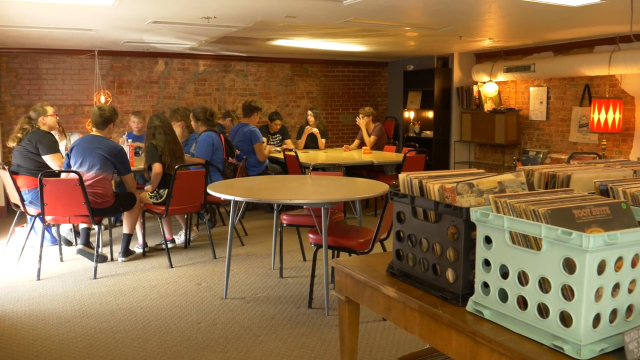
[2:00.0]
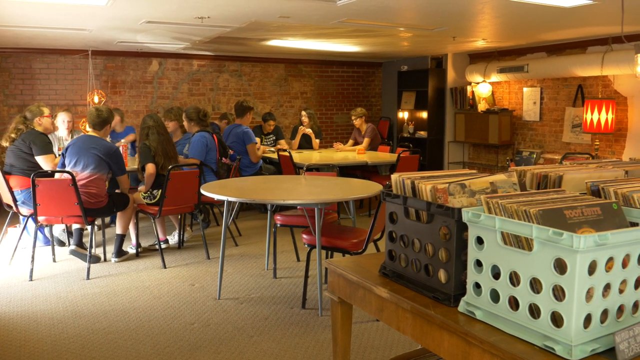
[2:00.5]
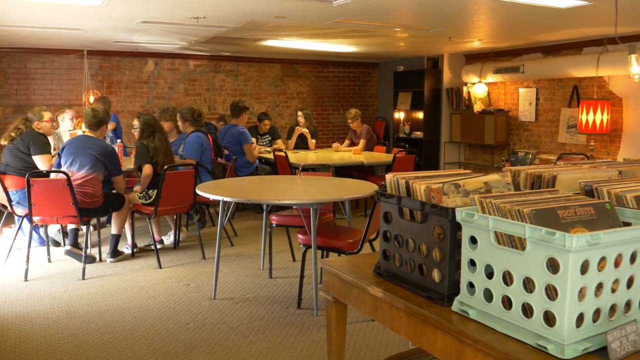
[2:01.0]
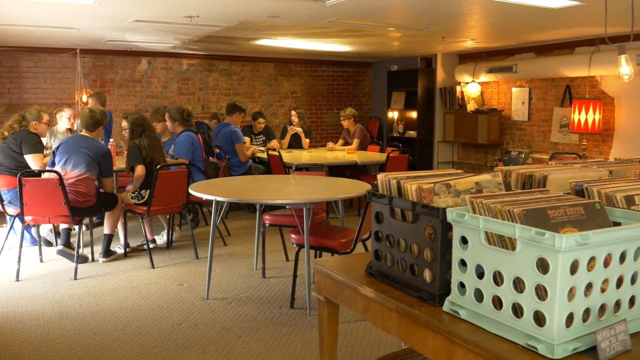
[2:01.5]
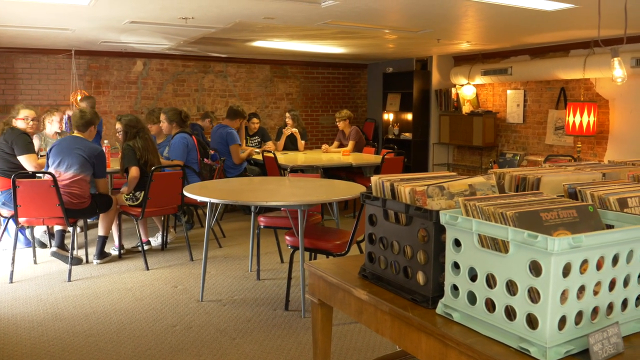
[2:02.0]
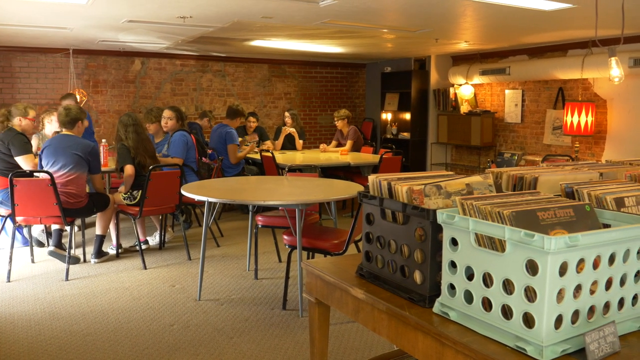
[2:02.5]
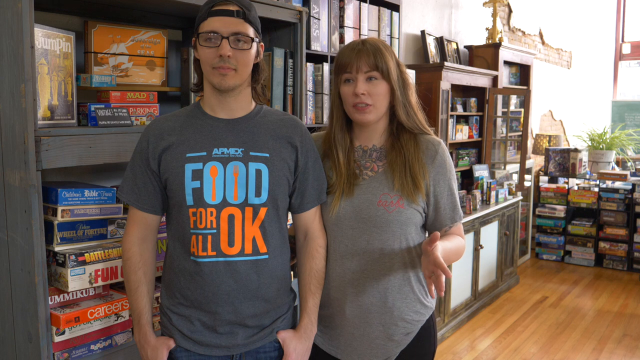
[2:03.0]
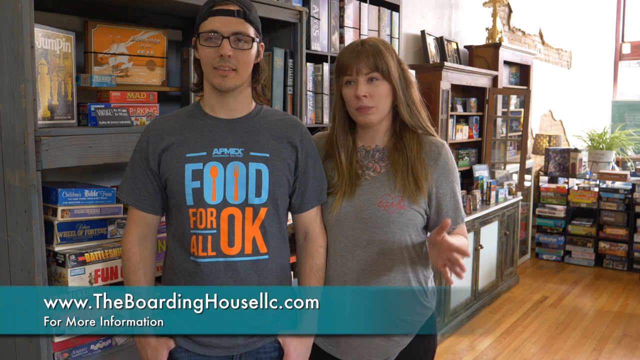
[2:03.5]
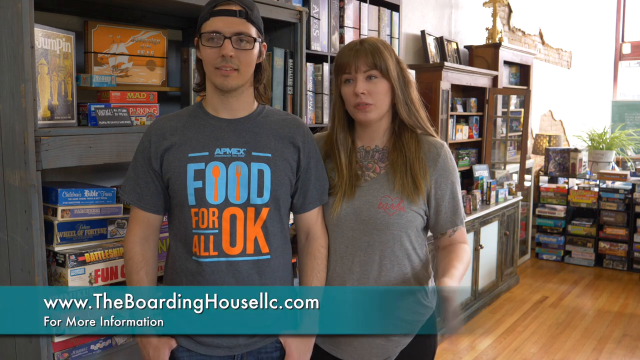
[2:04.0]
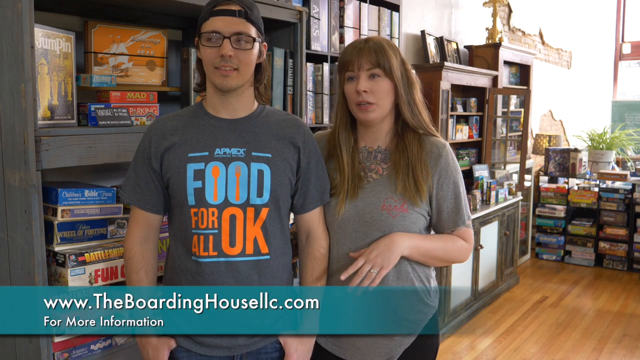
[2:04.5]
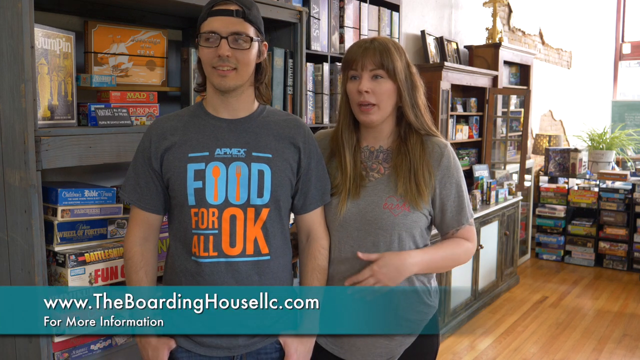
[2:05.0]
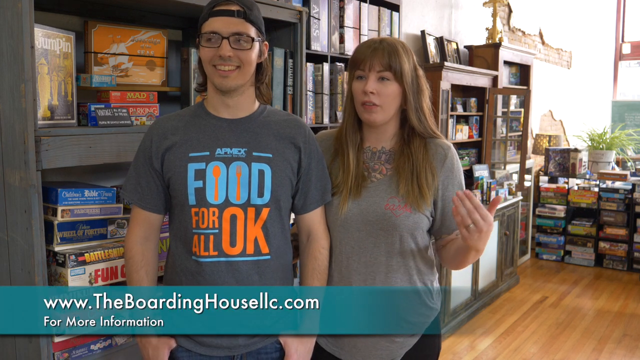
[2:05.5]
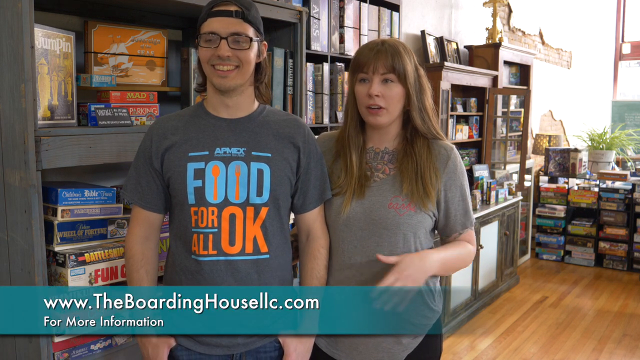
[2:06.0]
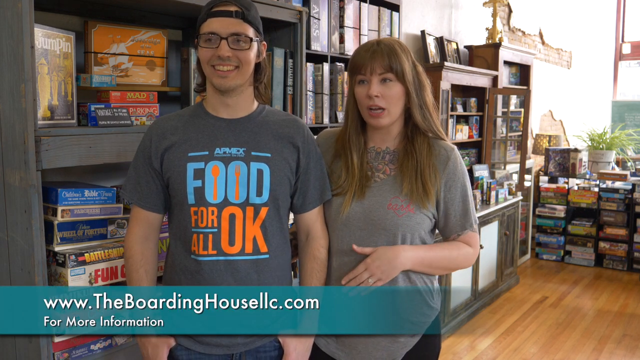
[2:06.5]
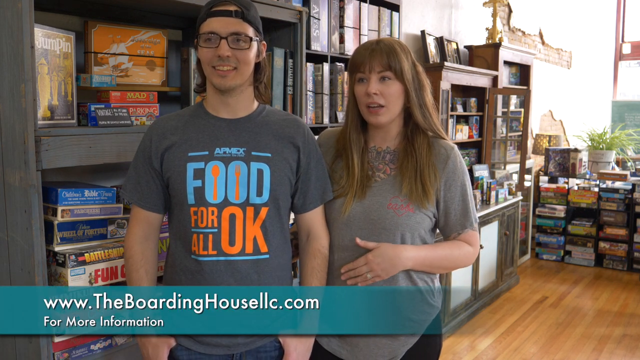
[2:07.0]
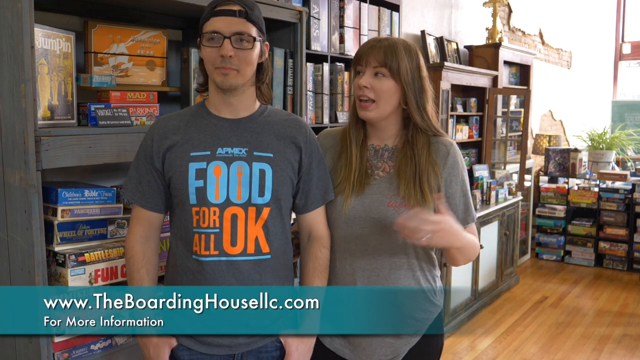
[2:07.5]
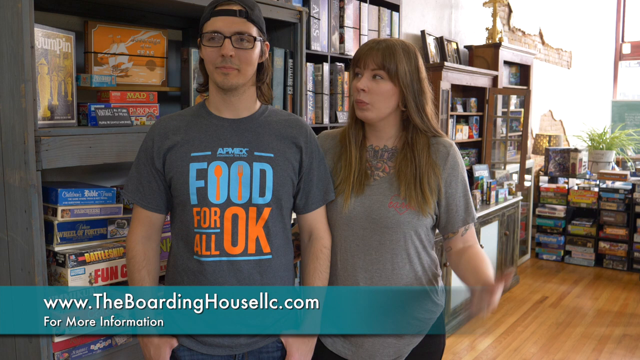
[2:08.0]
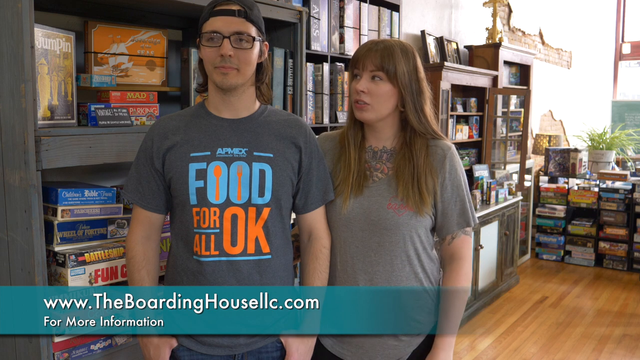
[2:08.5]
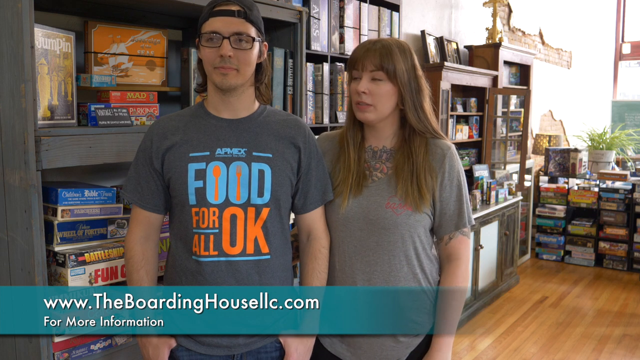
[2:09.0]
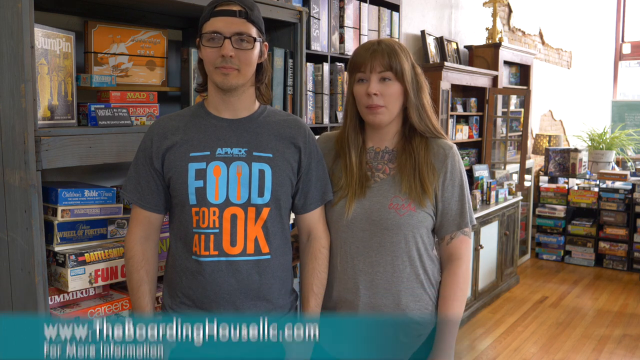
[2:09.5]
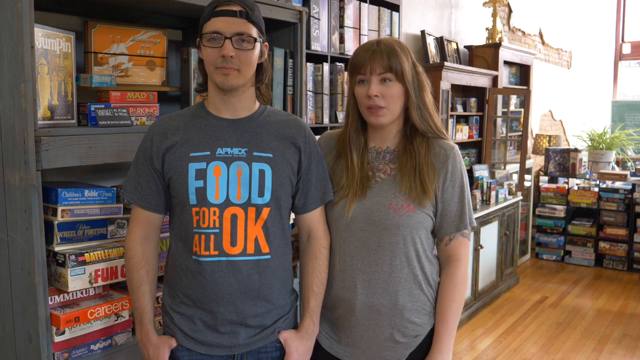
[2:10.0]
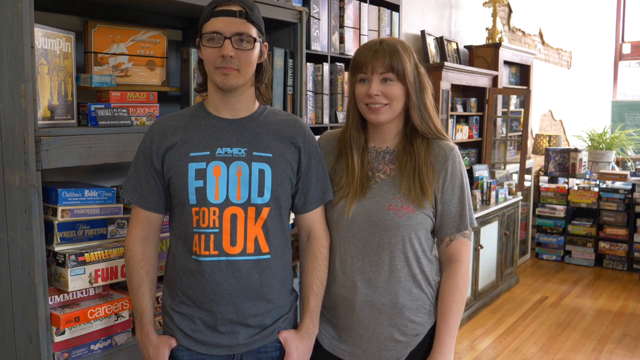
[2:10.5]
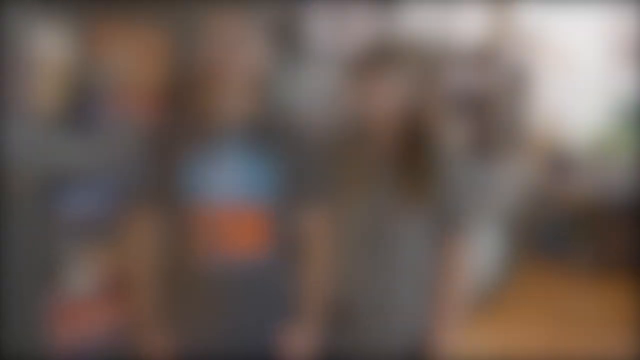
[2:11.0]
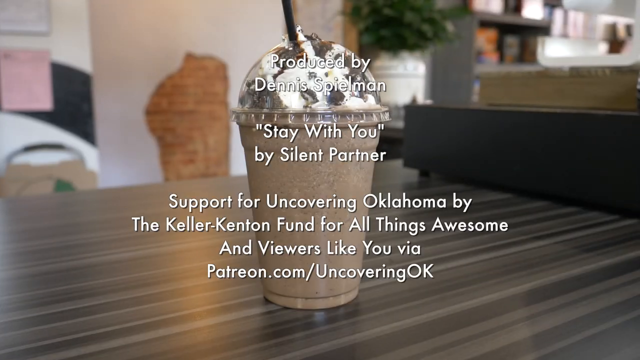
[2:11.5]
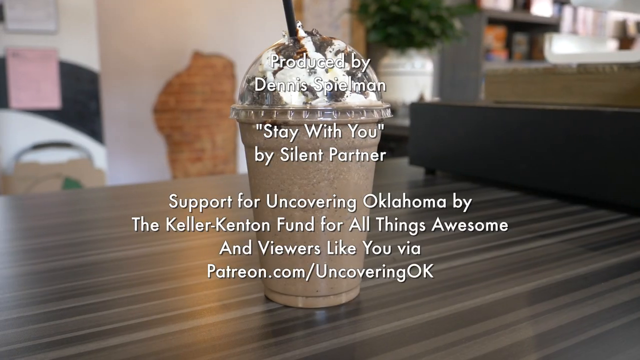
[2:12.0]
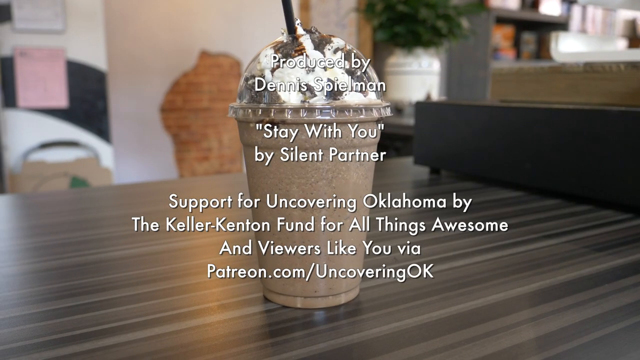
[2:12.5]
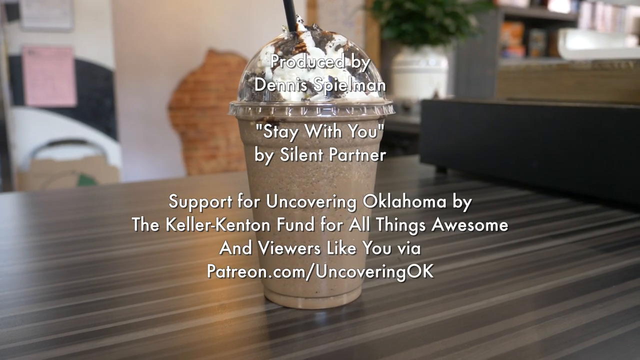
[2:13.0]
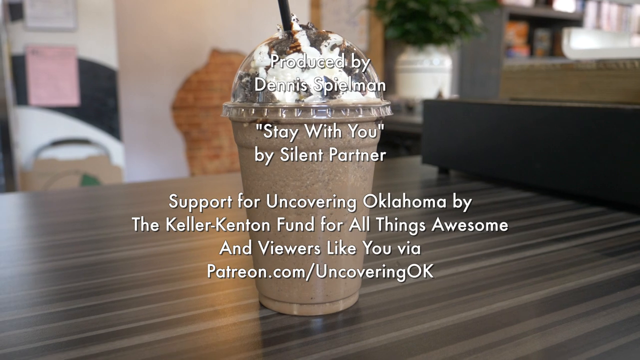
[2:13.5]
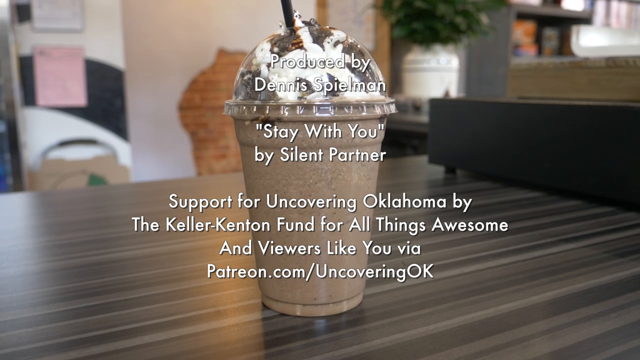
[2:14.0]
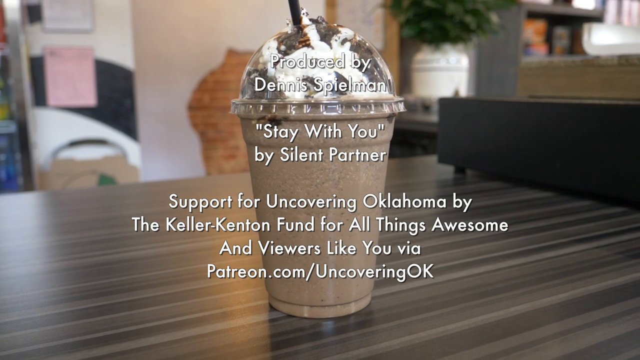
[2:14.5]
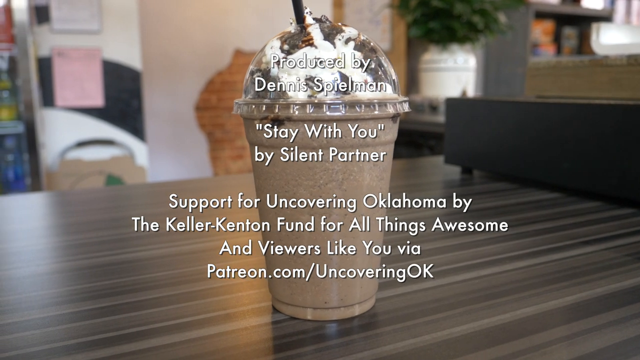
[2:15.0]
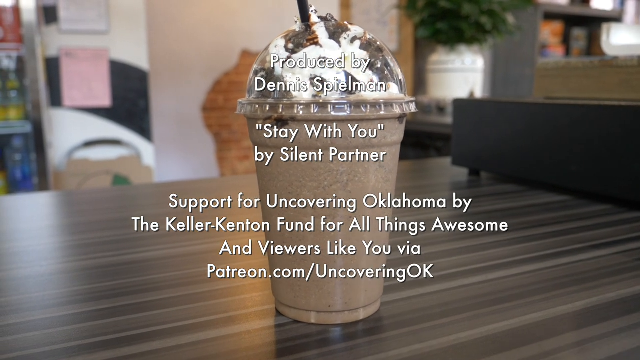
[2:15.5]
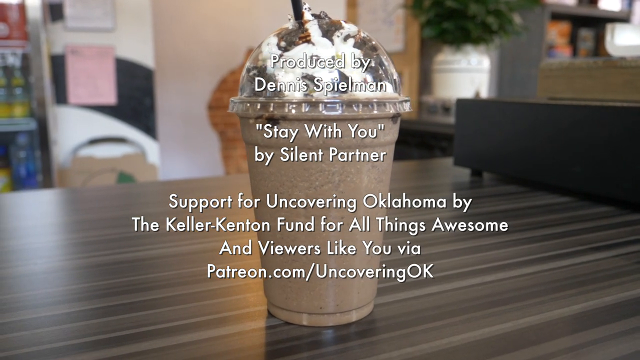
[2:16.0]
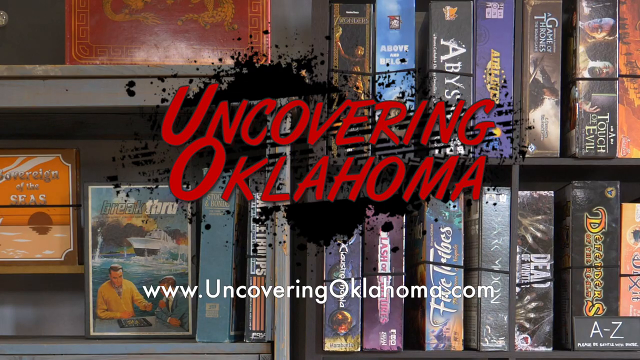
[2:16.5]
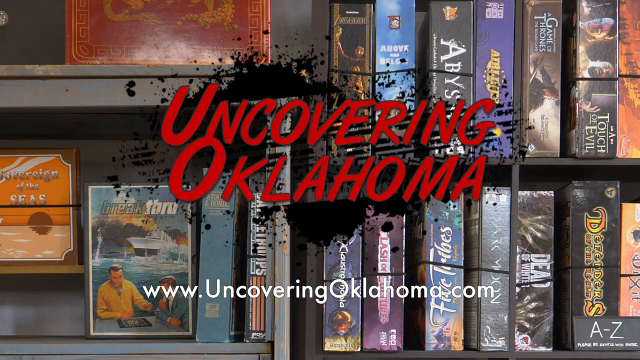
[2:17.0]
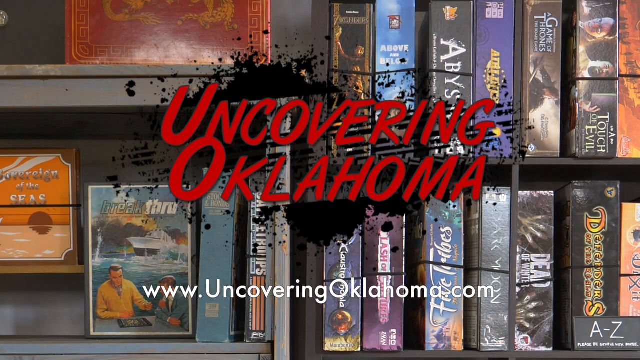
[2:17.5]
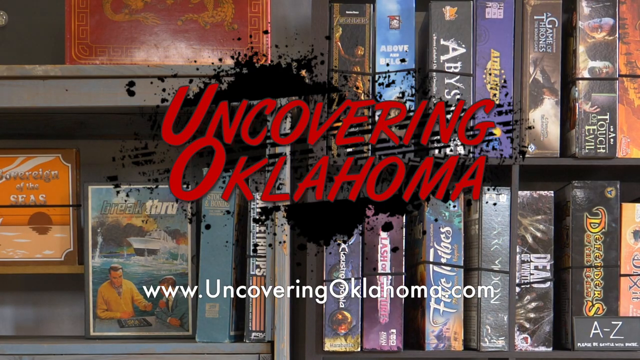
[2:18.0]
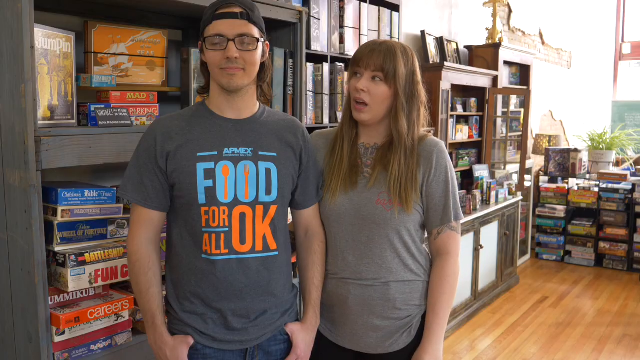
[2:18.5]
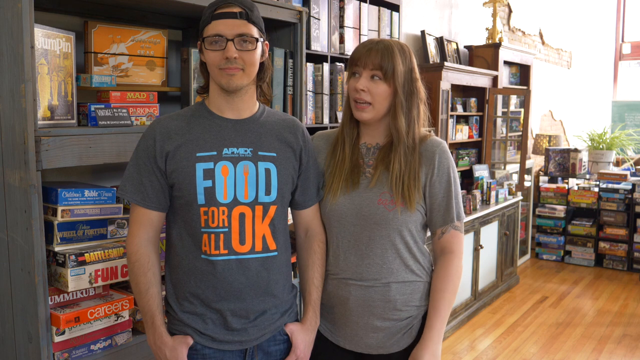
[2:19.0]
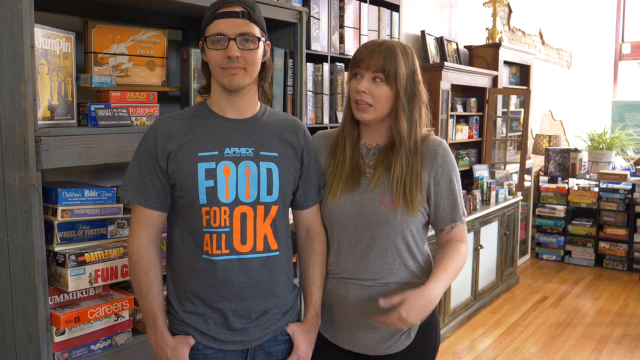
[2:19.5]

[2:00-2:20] A room has a low white ceiling, and the walls on the left and right are reddish brick. Two lights are in the upper right corner: a red cylinder-shaped light with white zigzag designs, and a ball or globe-shaped light in the upper left corner of that right brick wall. There are three tables in the room, all appearing white. People sit at the top two tables, apparently playing card games or board games with friends. Plastic bins holding the albums are in the bottom right corner. The next scene shows the owner of the boarding house smiling as the woman beside him speaks. She brings her left hand up to her stomach area and holds it there for a moment, then raises it toward her chest, lets it rotate over, and lets it fall back to her side, where it rests.